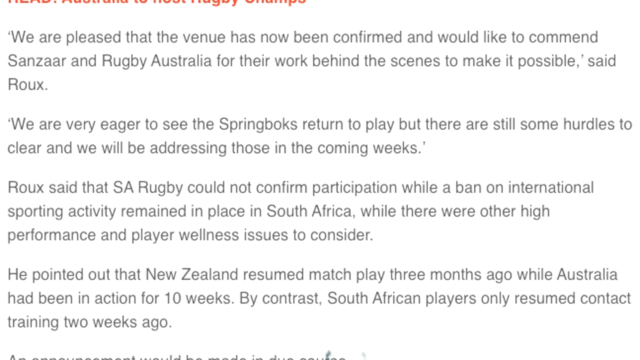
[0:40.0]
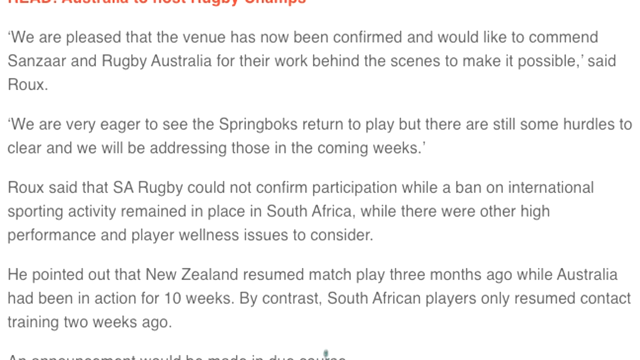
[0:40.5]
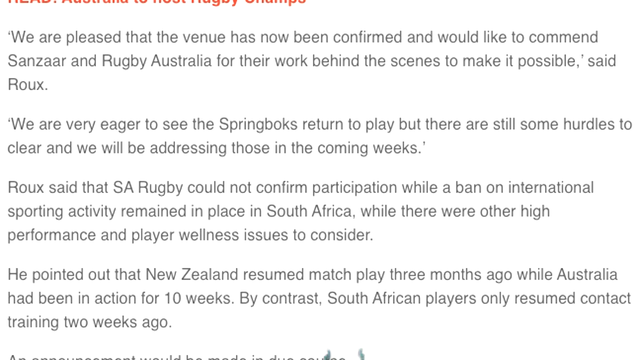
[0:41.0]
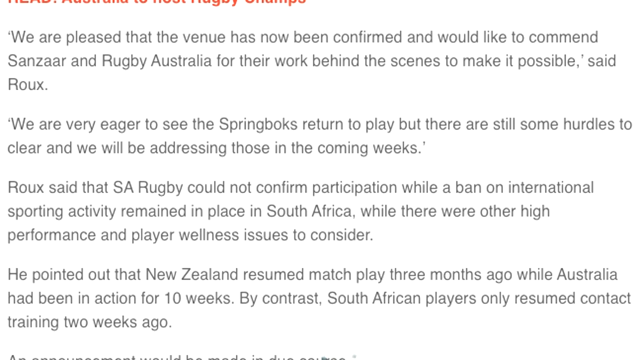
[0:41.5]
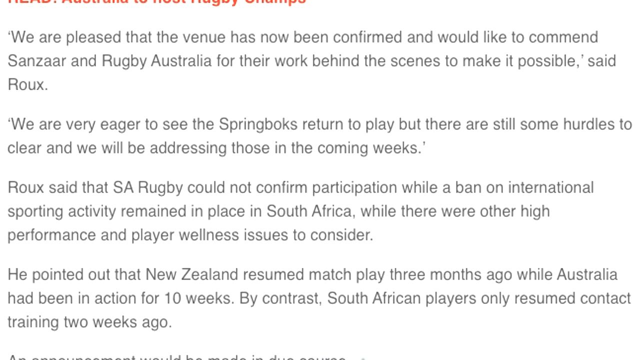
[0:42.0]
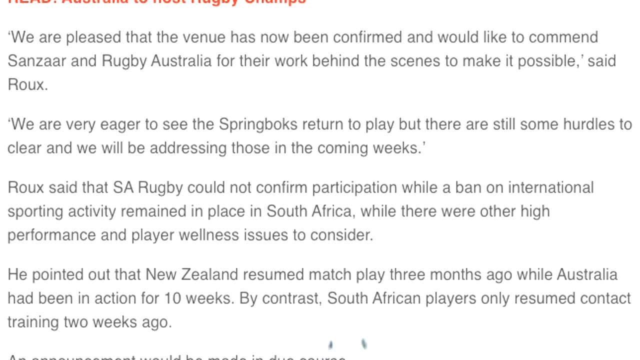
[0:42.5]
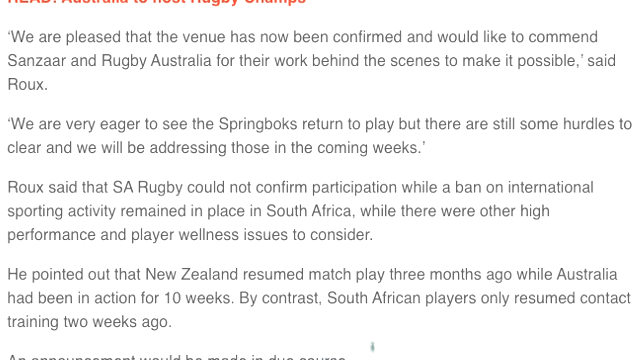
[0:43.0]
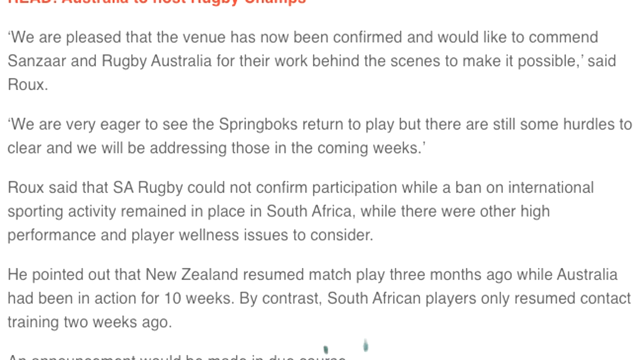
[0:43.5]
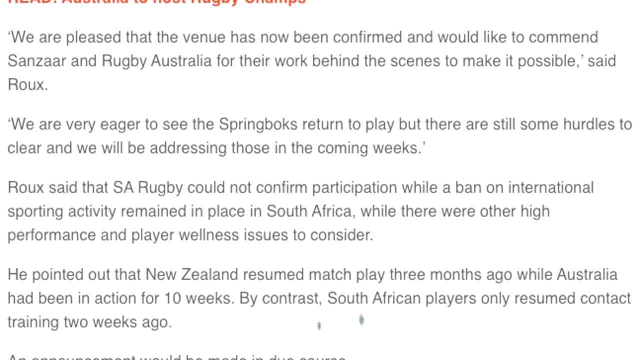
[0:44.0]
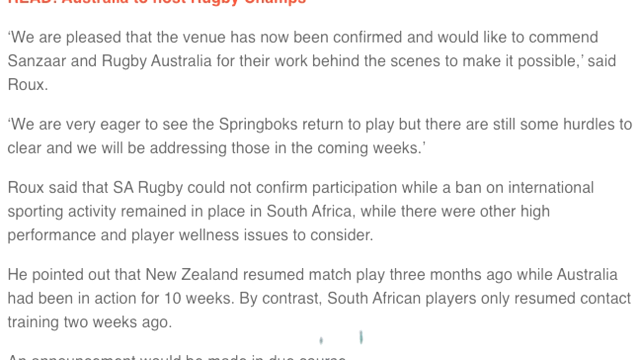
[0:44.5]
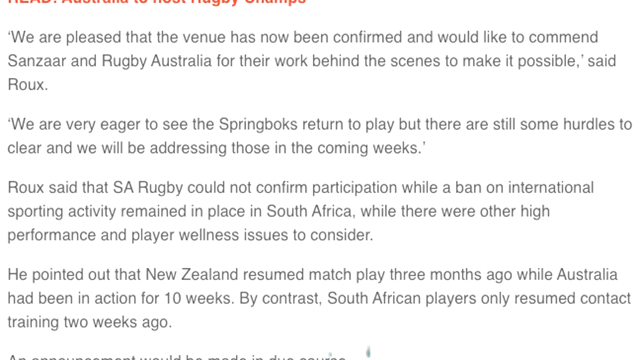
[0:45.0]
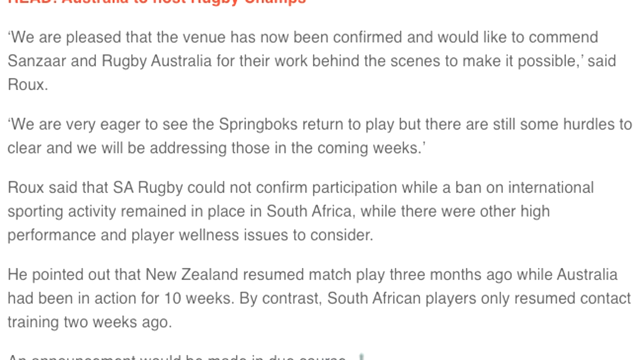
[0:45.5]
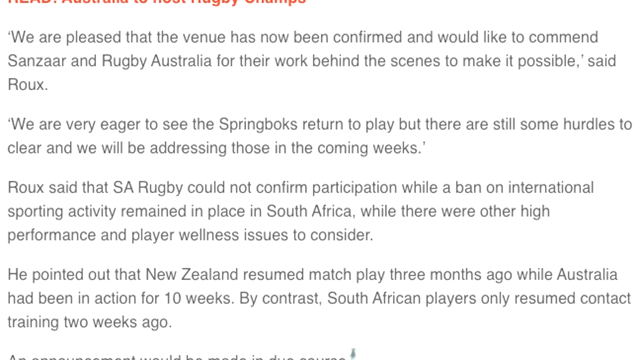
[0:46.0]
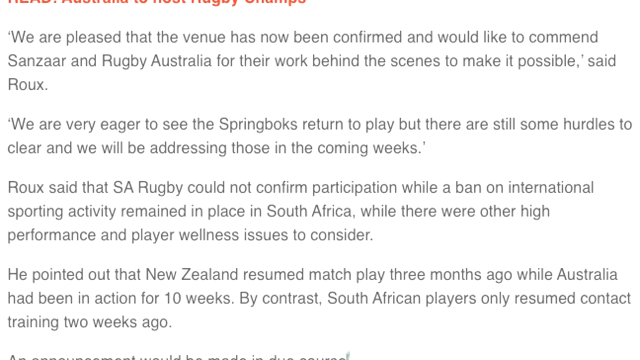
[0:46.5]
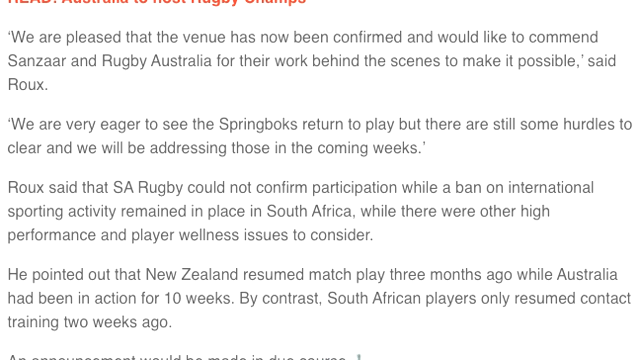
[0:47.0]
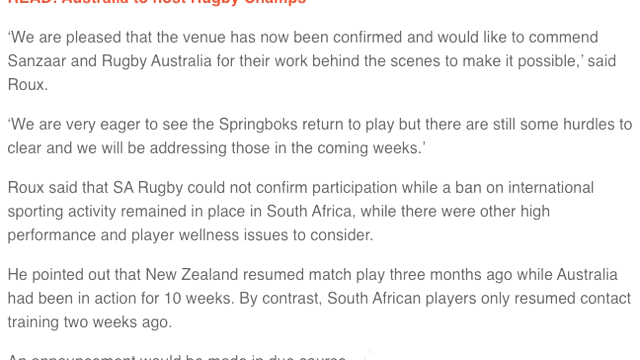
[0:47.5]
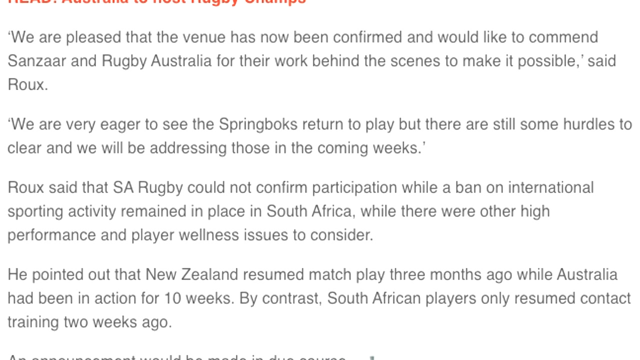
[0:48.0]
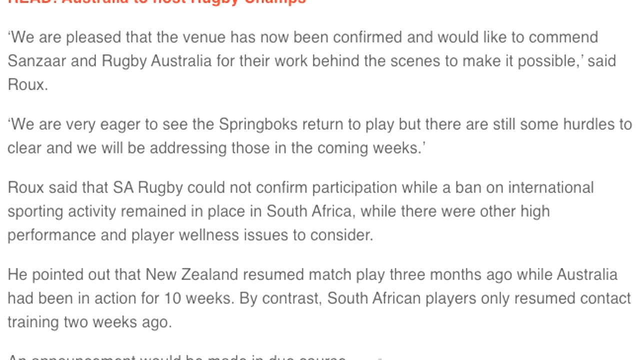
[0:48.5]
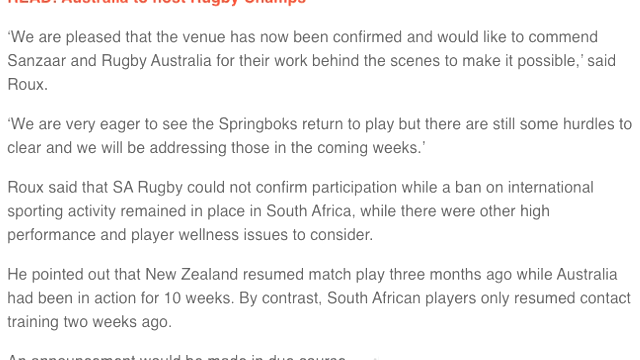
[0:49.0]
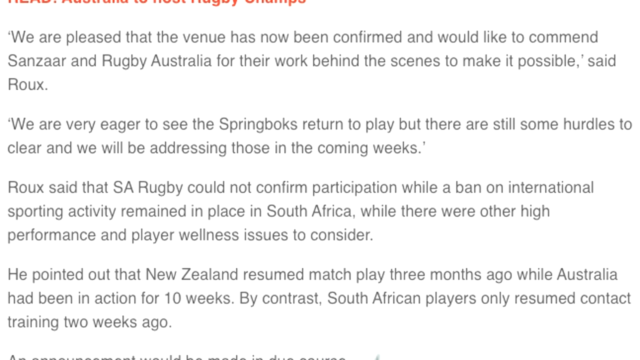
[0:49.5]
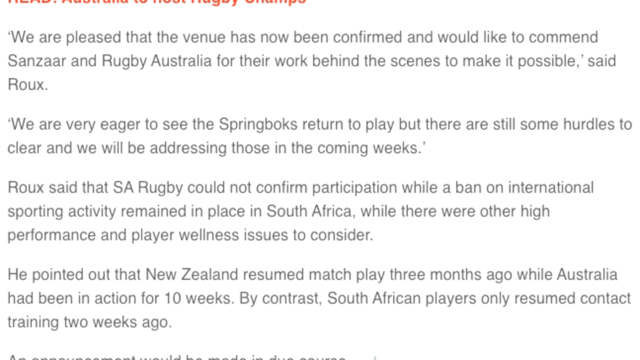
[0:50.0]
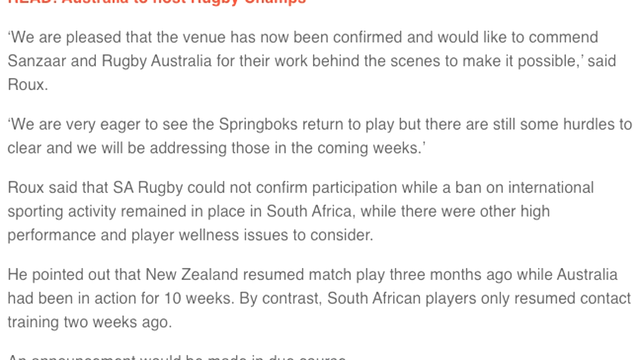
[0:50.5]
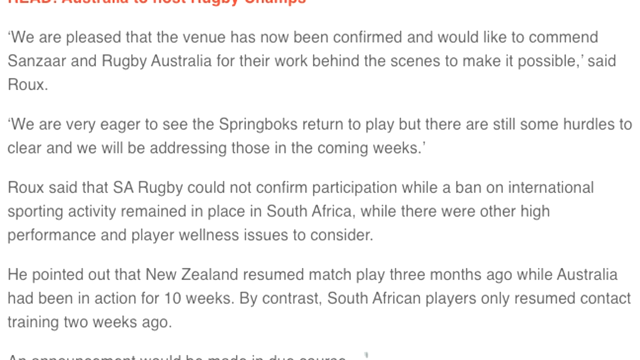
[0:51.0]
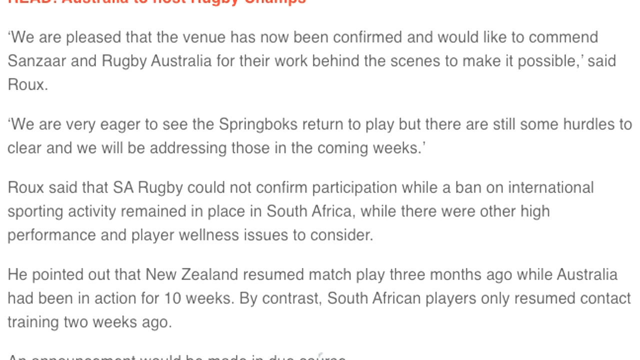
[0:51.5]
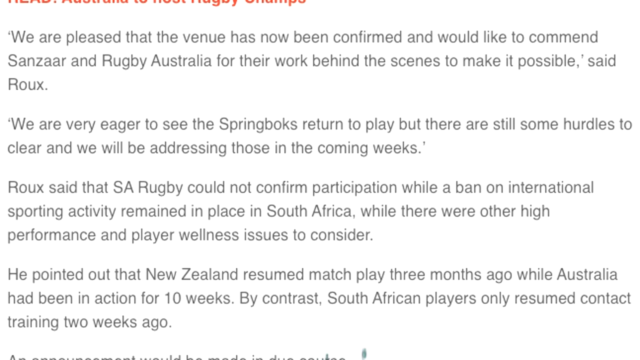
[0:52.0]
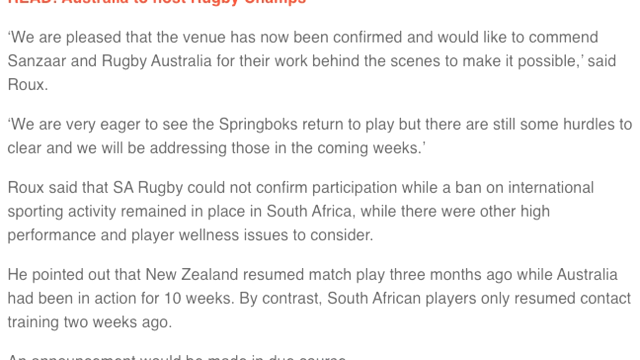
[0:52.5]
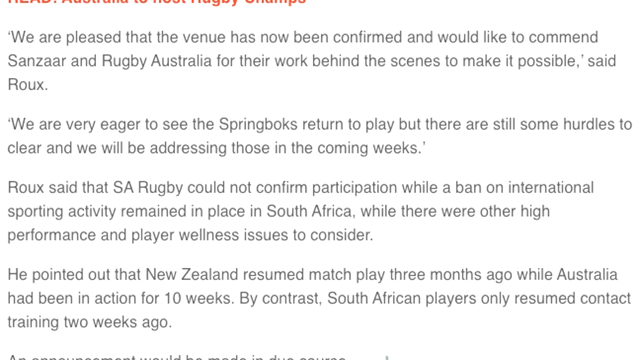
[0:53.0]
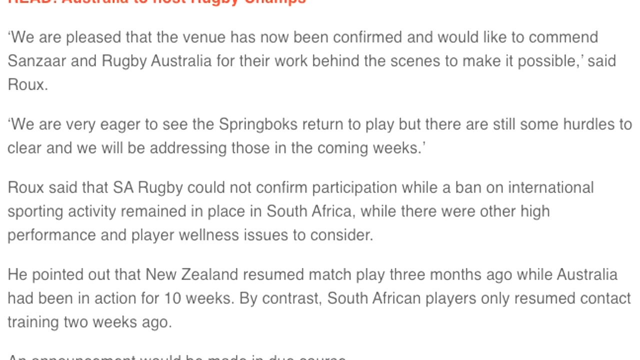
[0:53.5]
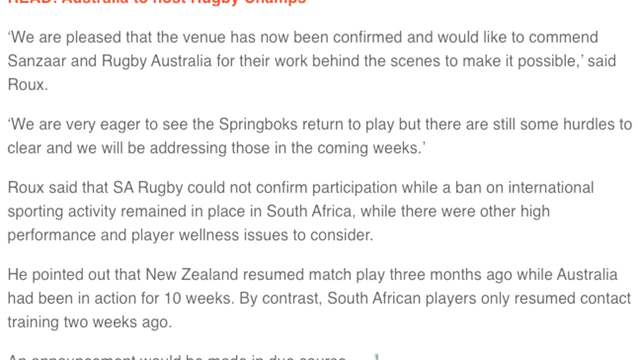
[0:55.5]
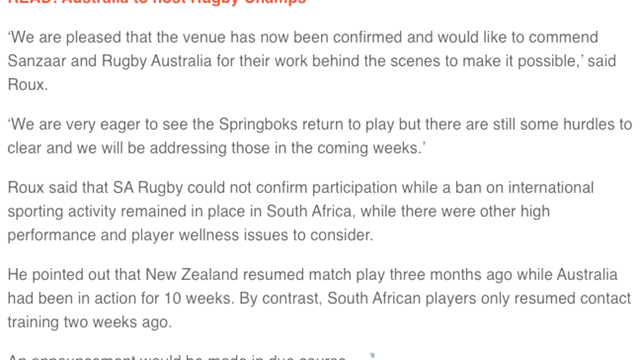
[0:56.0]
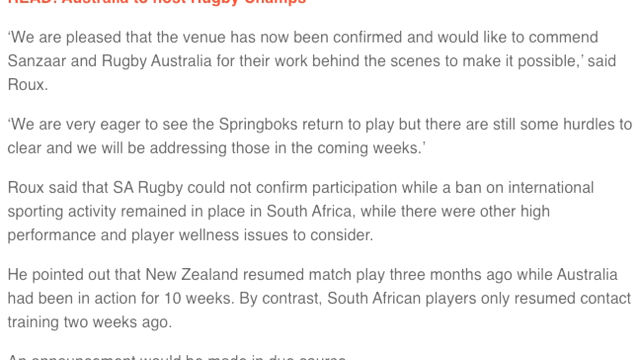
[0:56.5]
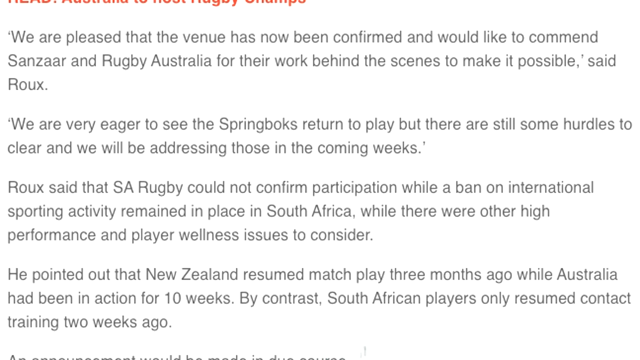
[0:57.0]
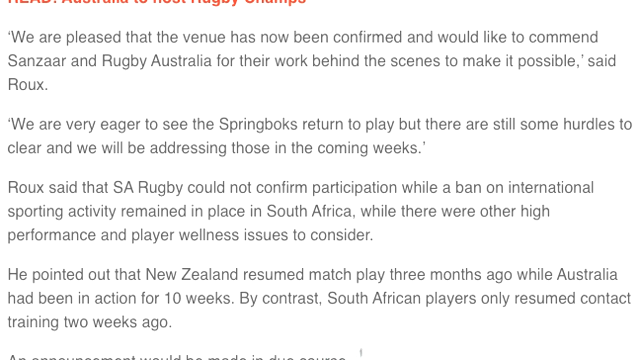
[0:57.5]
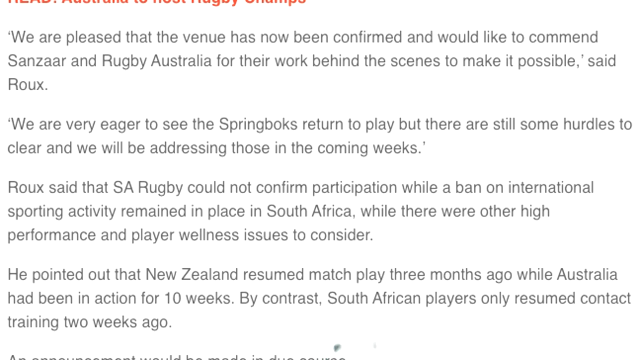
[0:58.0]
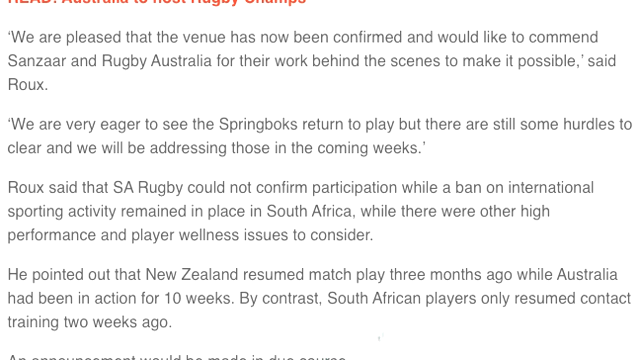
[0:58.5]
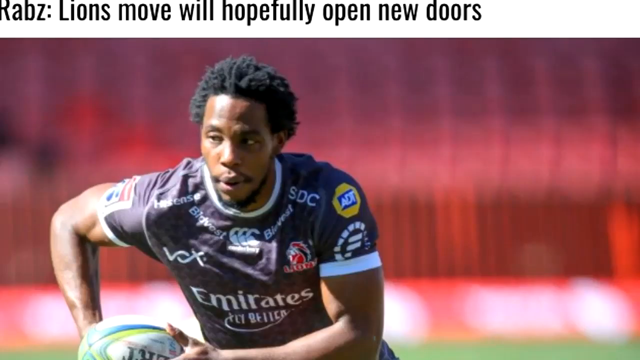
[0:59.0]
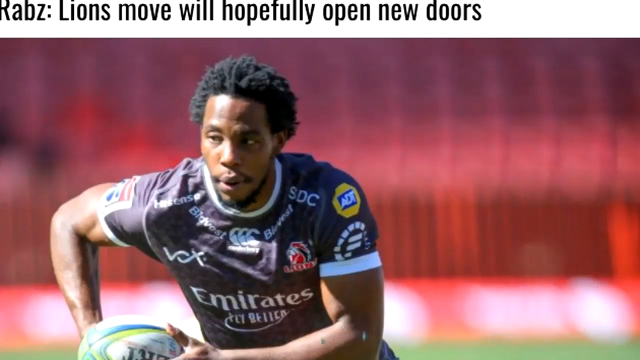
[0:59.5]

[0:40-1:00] The static image of a lot of text in a dark gray font against a white background continues. It briefly switches to an image of a rugby player, a black man with medium-length hair, wearing a dark blue jersey with the word "Emirates" on the front and several different logos, mostly in white, on the dark blue uniform. On his left arm, at the top of his shoulder, there is a patch with the ADT logo. At the top, the text says "RABZ" and "Lions Move will hopefully open new doors." It then quickly switches back to the same text as before, which ends with "He pointed out that New Zealand resumed match play three months ago while Australia had been in action for 10 weeks. By contrast, South African players only resumed contact training two weeks ago."